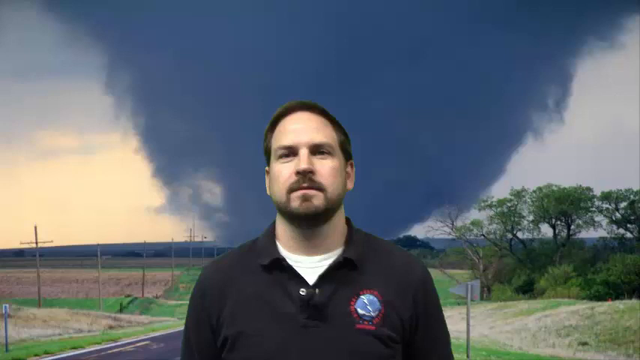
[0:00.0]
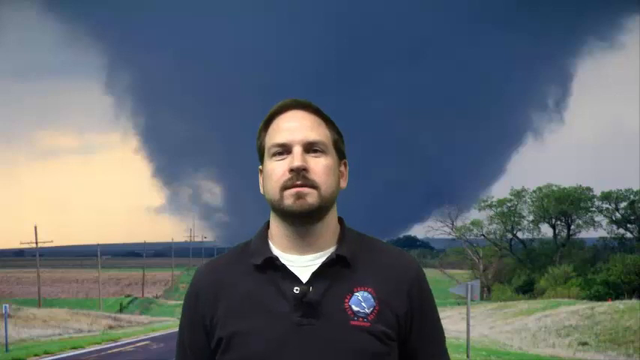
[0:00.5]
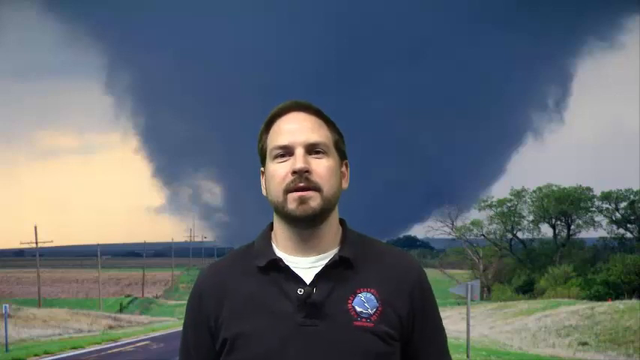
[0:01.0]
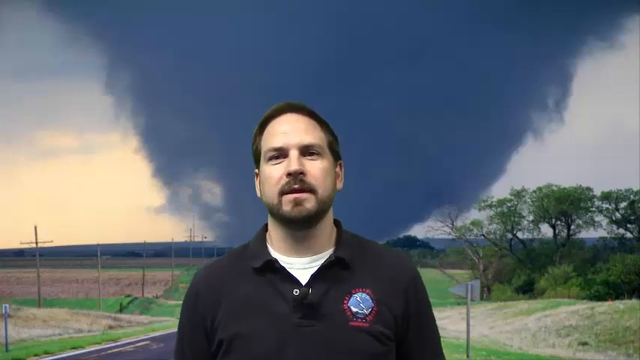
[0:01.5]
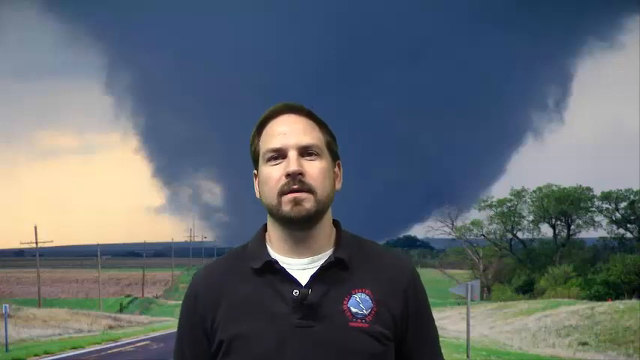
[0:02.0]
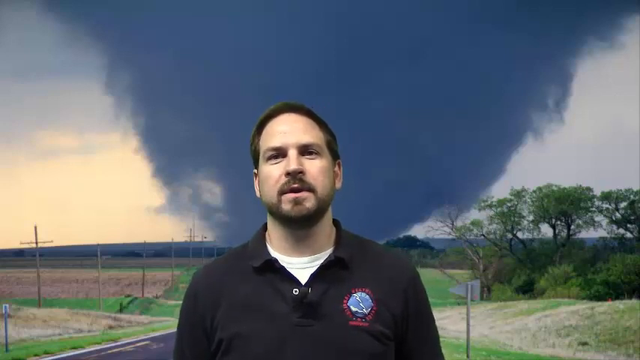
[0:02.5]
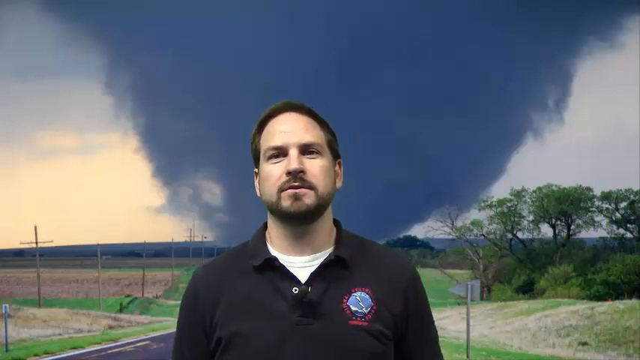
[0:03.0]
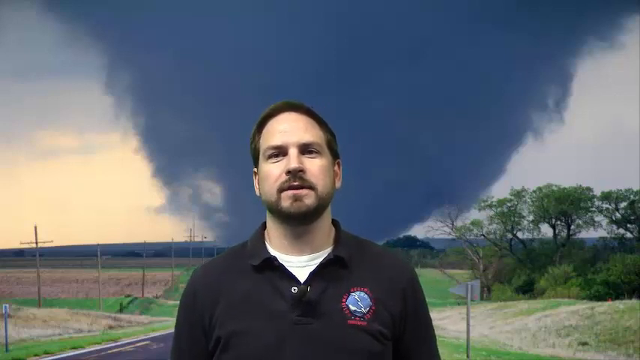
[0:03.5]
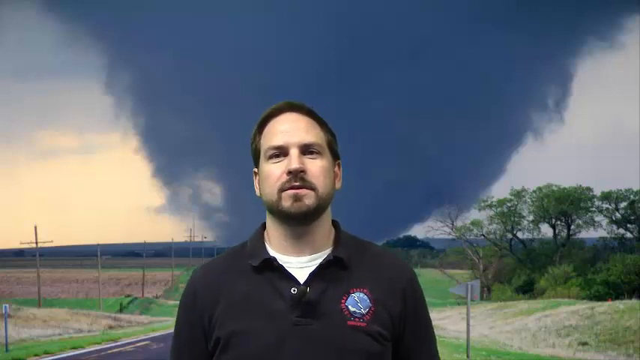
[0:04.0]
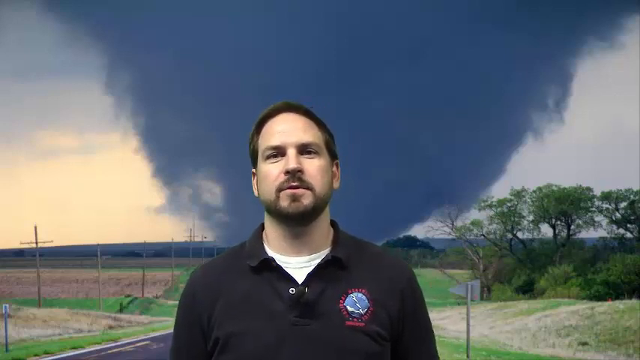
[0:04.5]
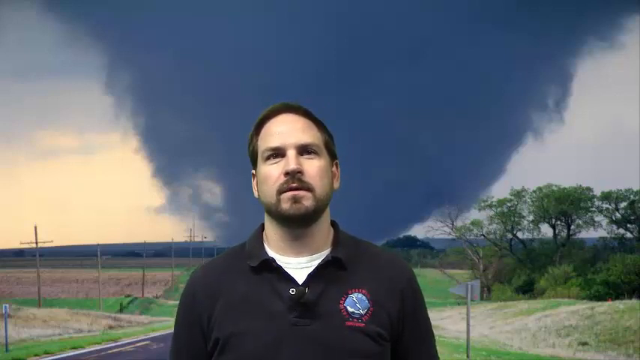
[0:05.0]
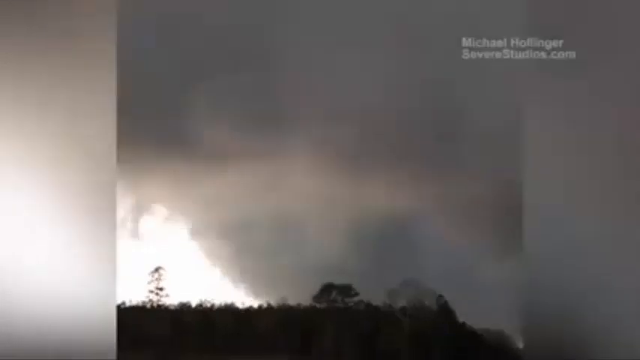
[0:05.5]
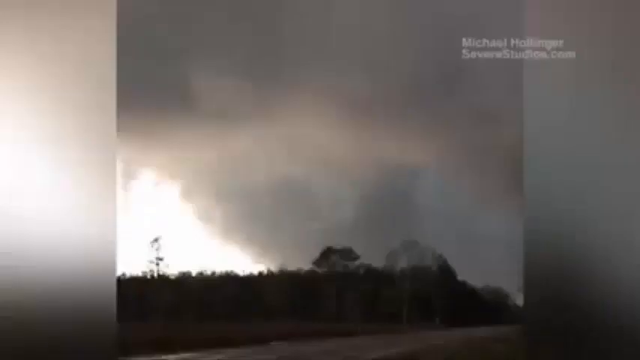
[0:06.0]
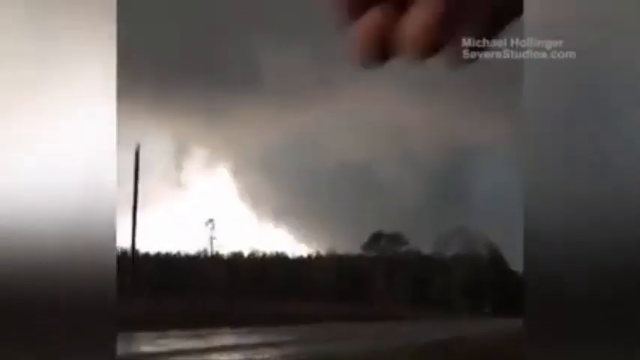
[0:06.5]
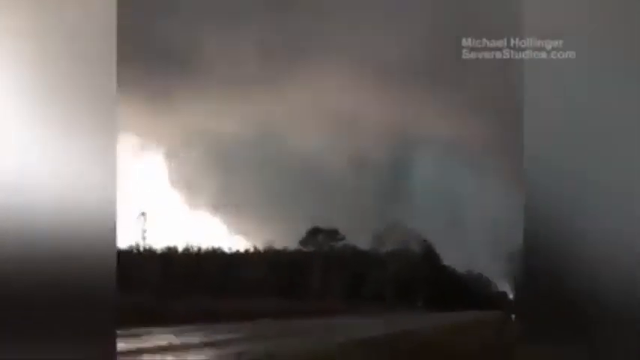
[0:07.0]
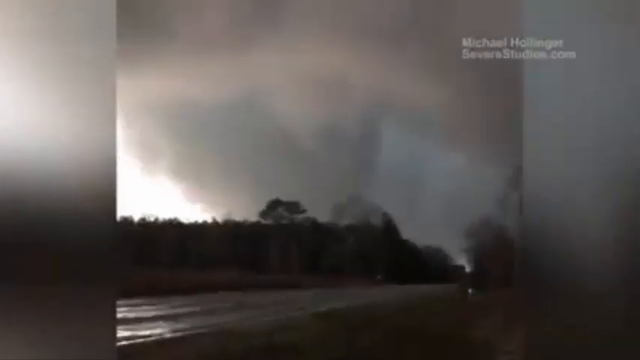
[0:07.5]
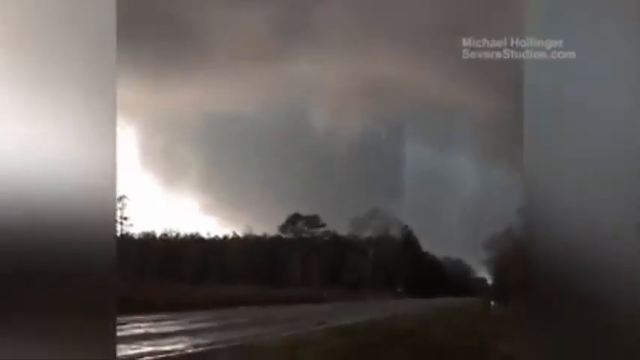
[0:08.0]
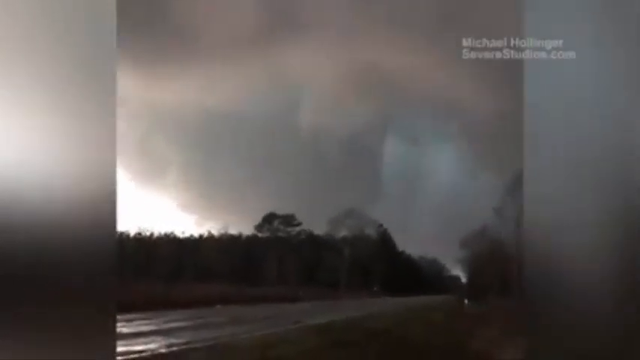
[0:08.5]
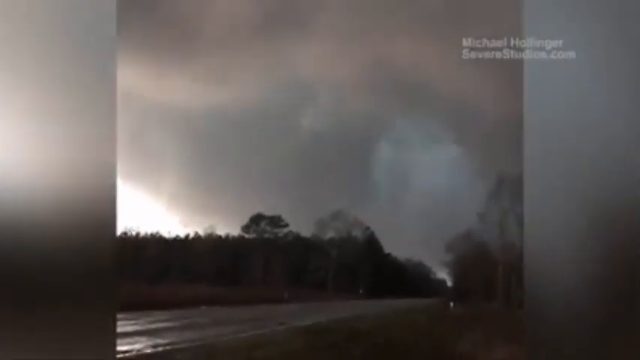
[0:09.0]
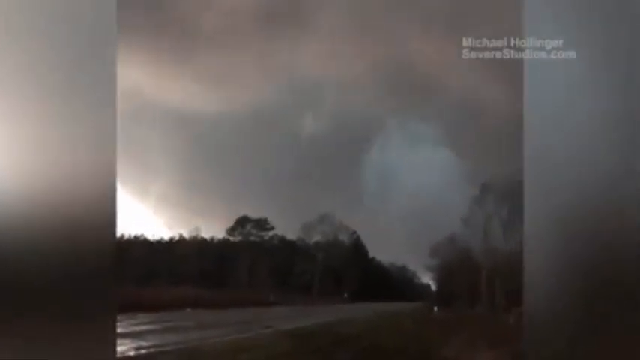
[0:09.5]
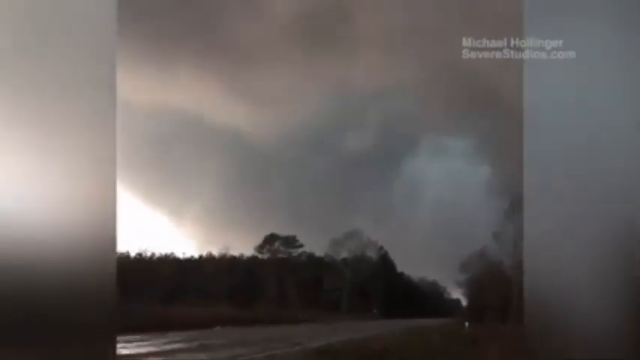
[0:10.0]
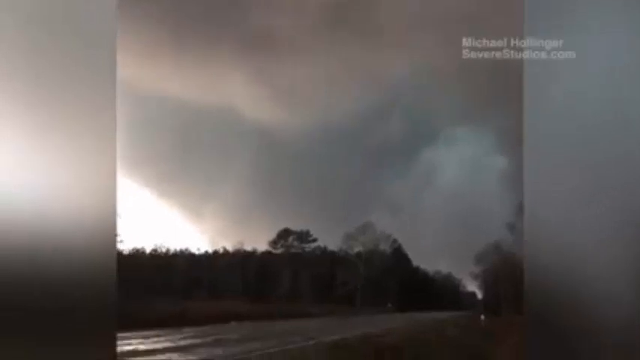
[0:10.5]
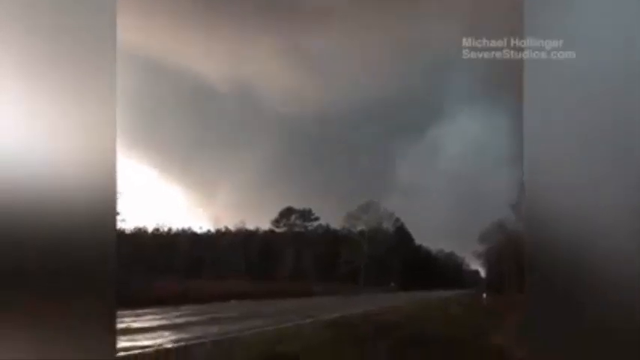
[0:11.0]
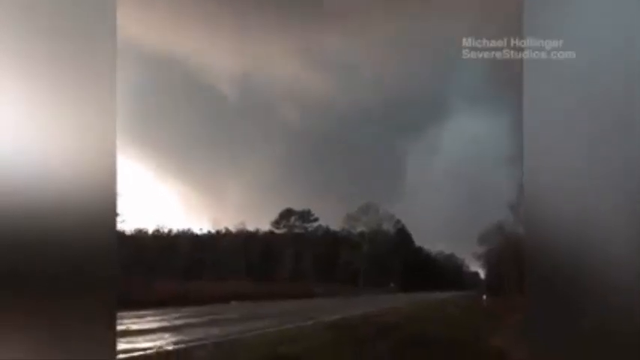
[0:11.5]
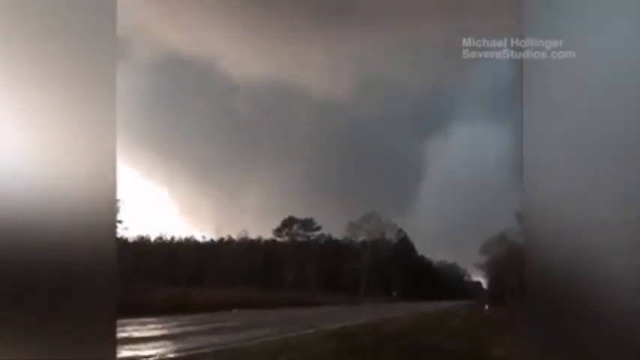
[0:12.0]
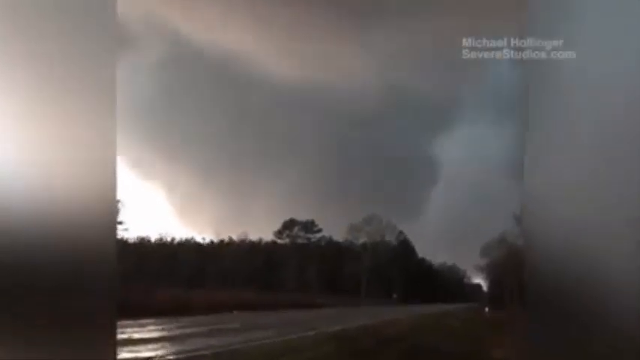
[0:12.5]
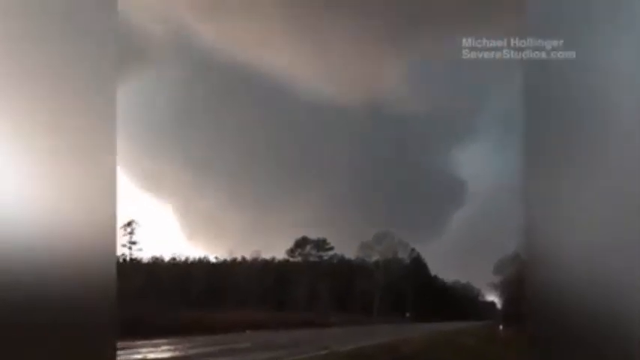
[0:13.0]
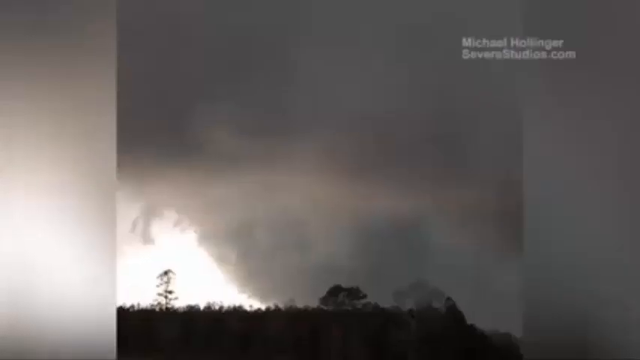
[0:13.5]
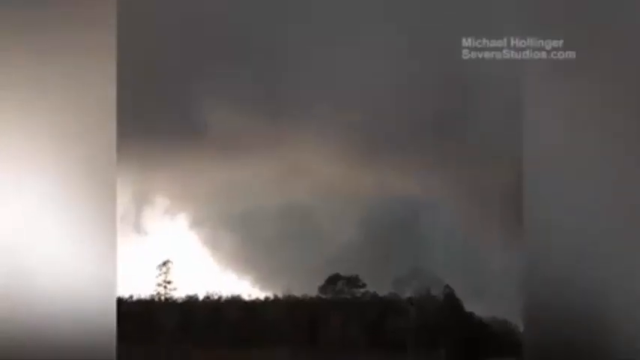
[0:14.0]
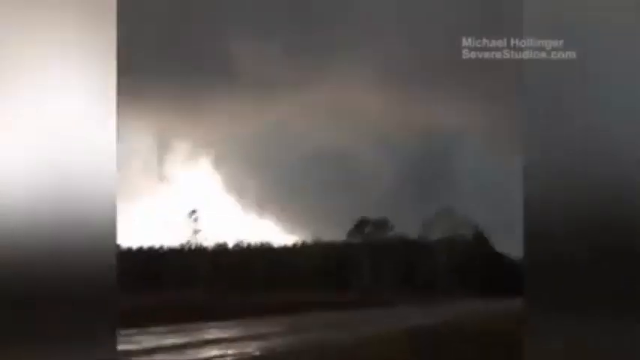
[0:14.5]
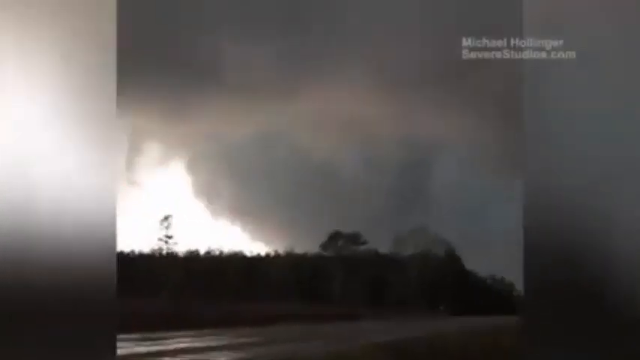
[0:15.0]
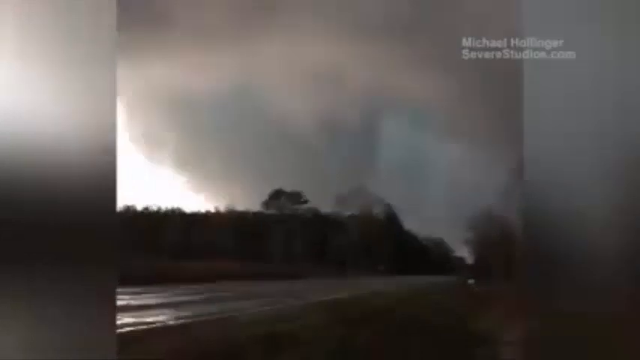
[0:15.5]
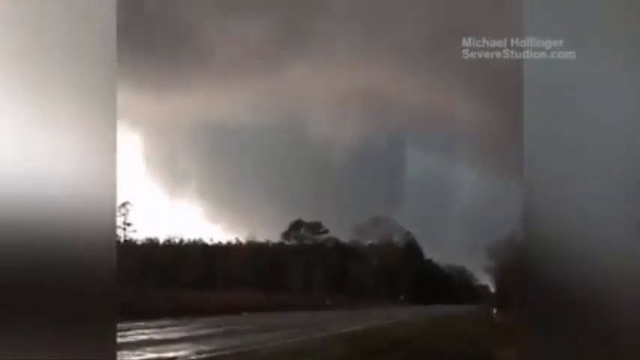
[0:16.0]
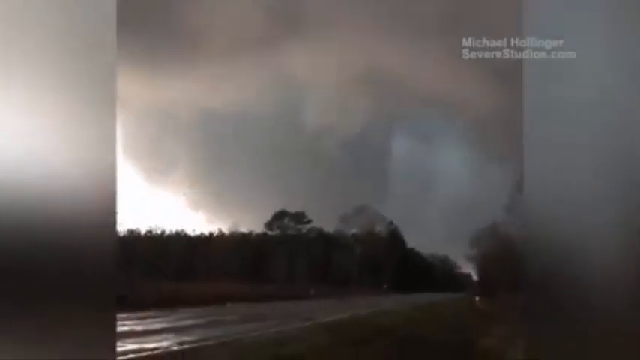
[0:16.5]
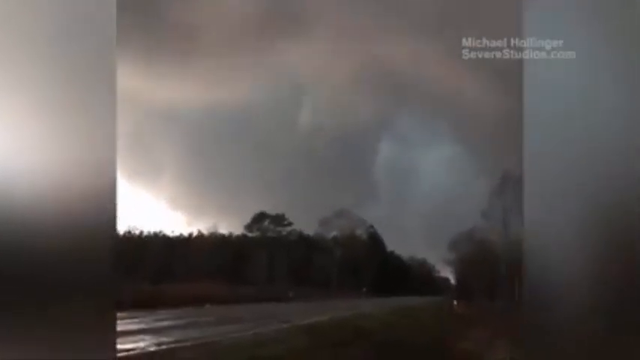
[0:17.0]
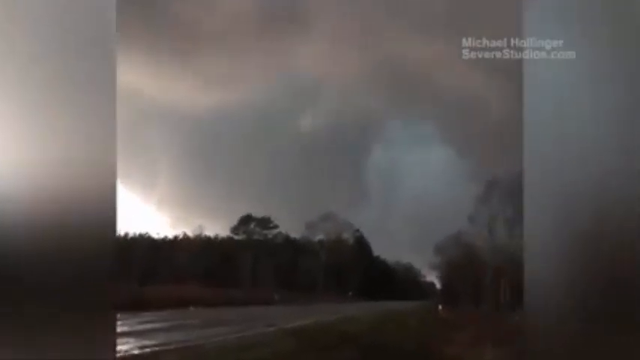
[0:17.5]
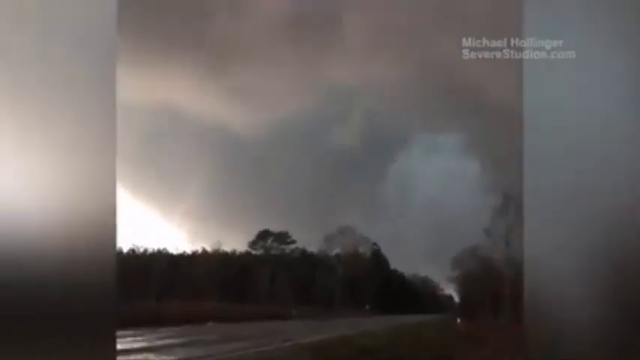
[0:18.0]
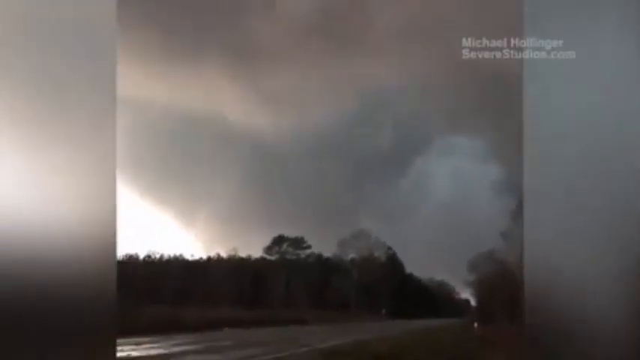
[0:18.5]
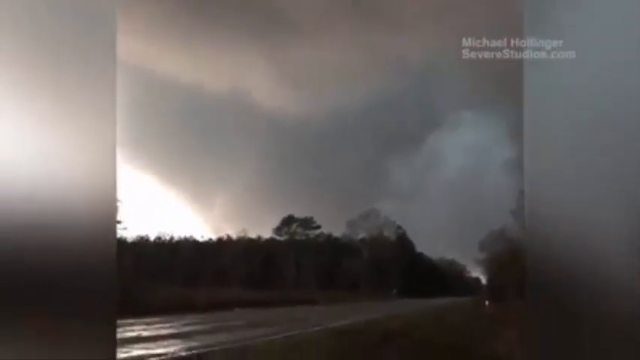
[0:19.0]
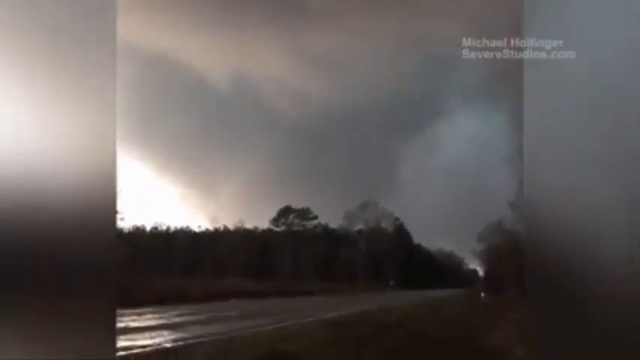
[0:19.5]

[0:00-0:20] A man in a black polo shirt with a white undershirt stands mid-screen. He has dark hair and a receding hairline. In the background is farmland with rows of telephone poles and electricity wires, with some trees and bushes on the right-hand side. In the center of the background, a very large tornado approaches from the distance. This appears to be a green screen the man is standing in front of, showing that image behind him; there is no wind or movement, giving the impression that this is a studio. He wears a black collared polo shirt with a white undershirt and speaks to the camera. The video then cuts to footage of a very large tornado in the distance, which keeps growing larger and larger as it comes toward the camera. This footage repeats a few times.